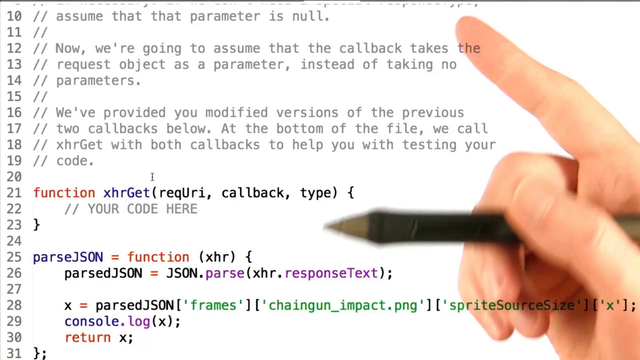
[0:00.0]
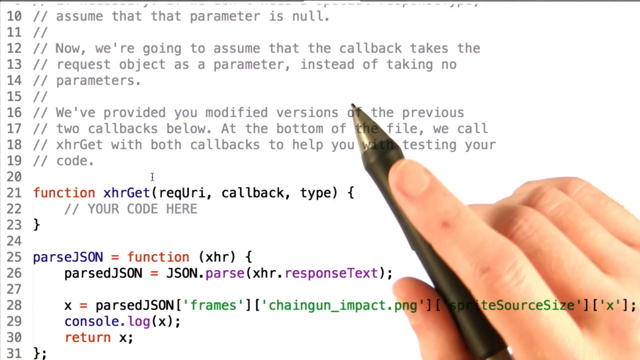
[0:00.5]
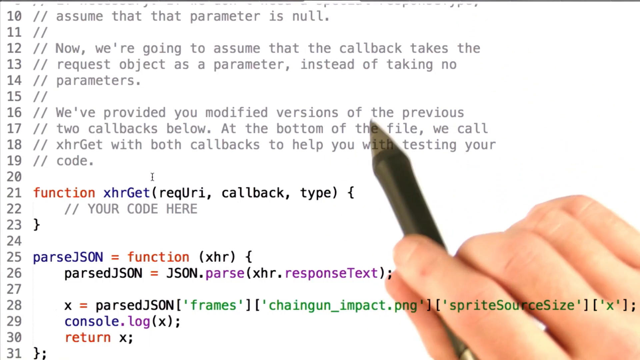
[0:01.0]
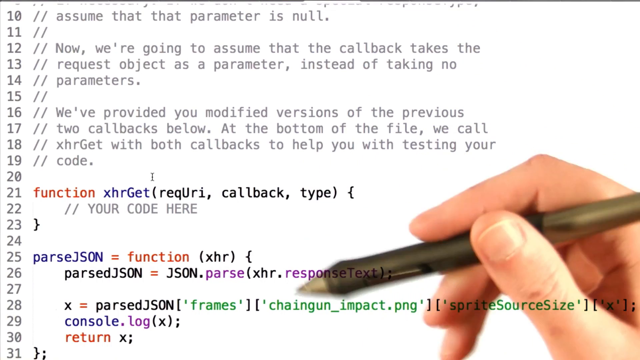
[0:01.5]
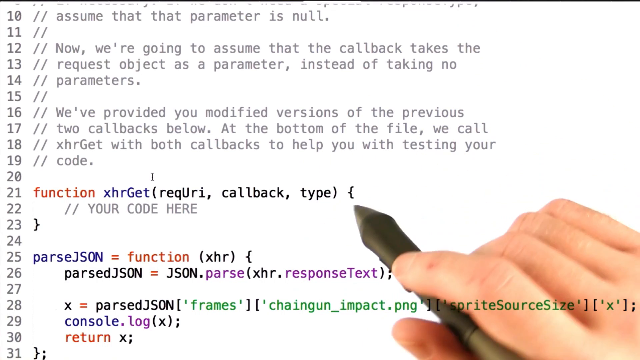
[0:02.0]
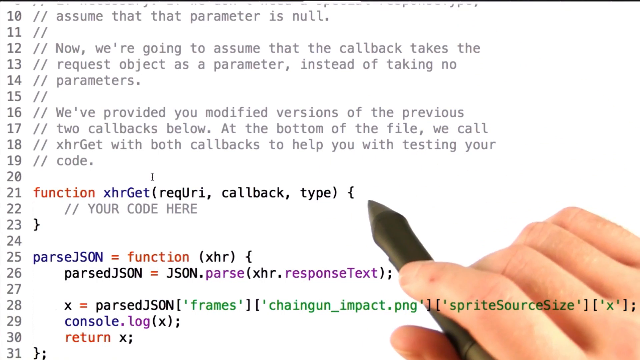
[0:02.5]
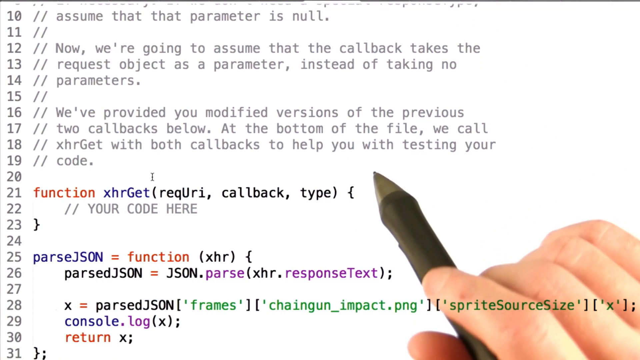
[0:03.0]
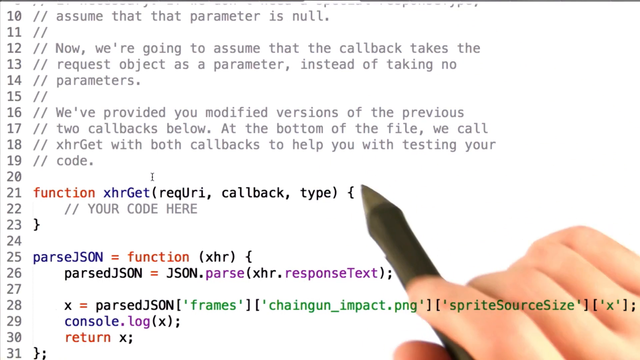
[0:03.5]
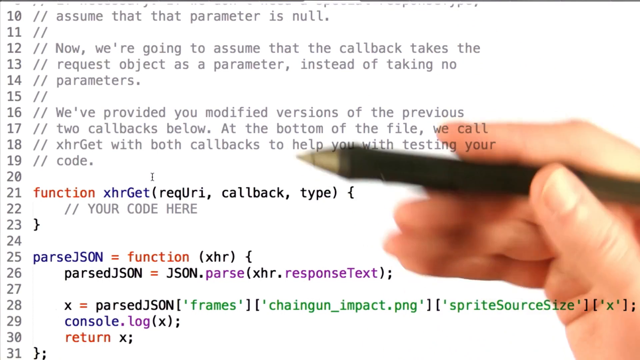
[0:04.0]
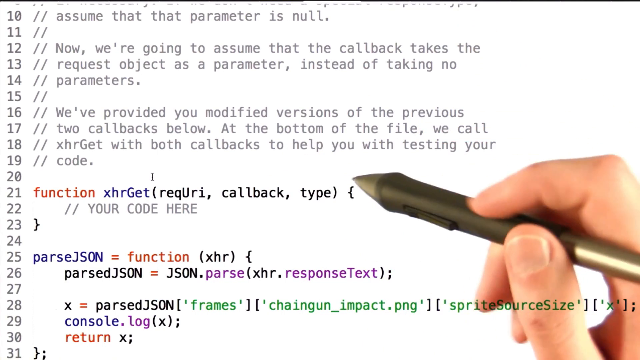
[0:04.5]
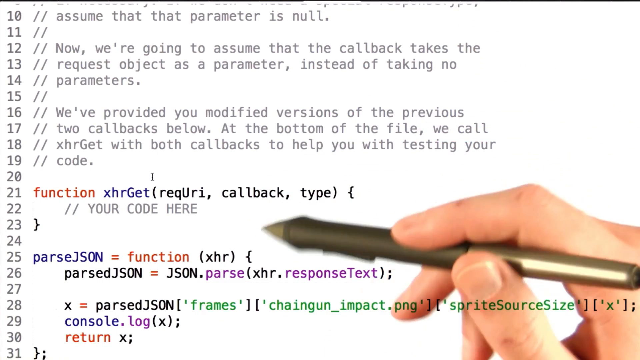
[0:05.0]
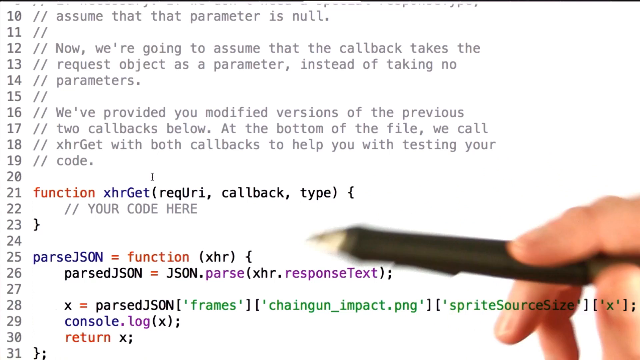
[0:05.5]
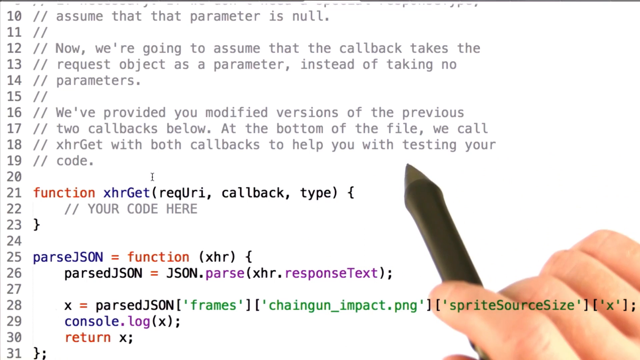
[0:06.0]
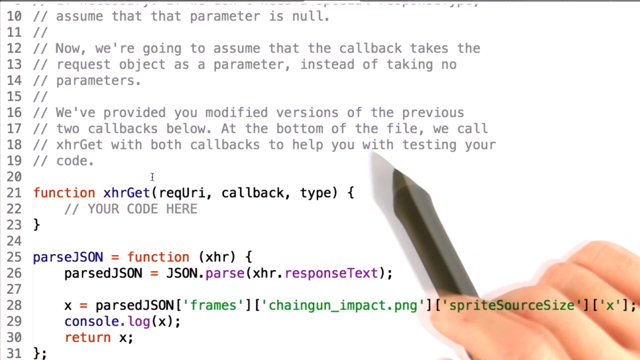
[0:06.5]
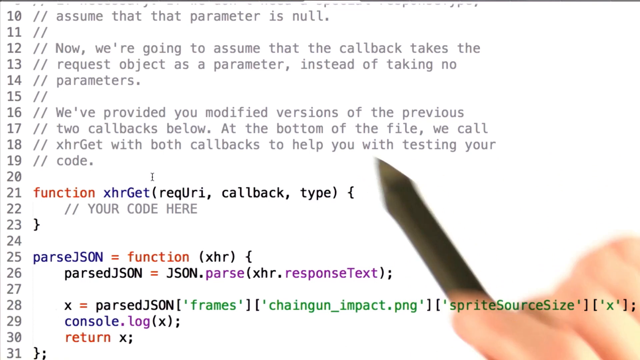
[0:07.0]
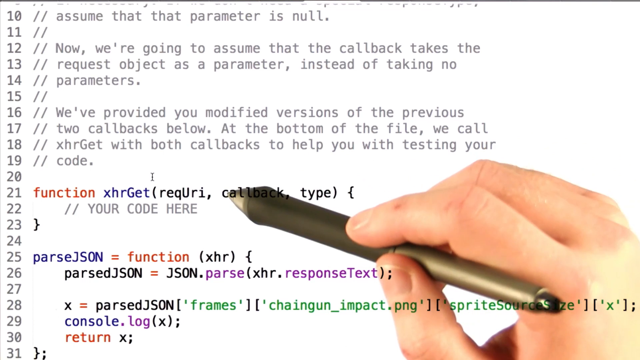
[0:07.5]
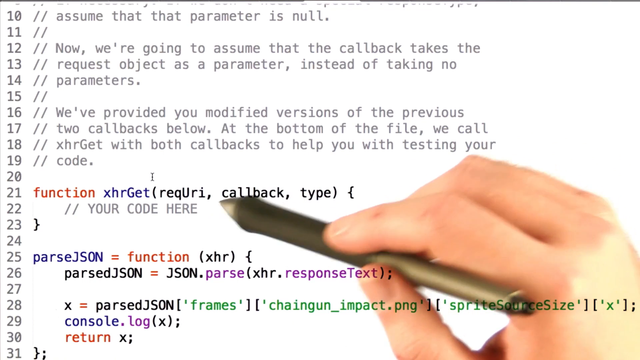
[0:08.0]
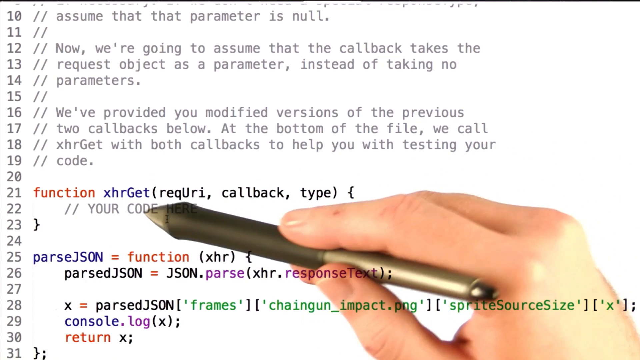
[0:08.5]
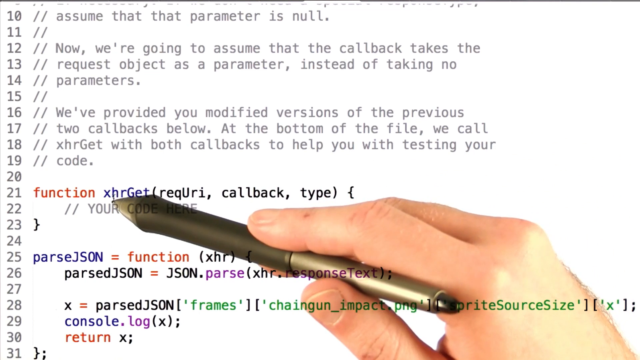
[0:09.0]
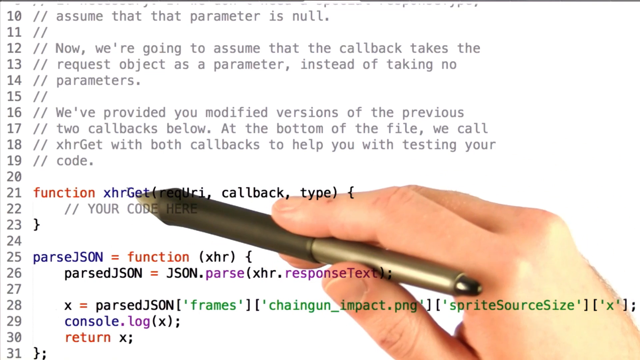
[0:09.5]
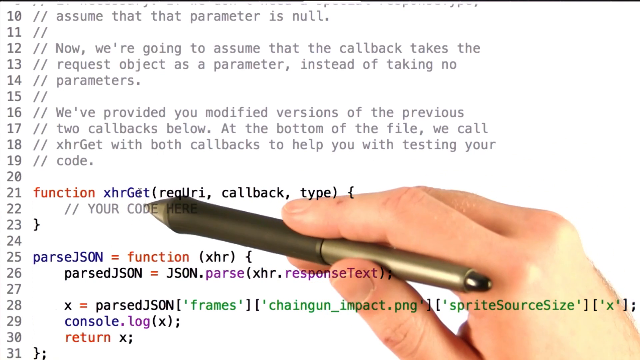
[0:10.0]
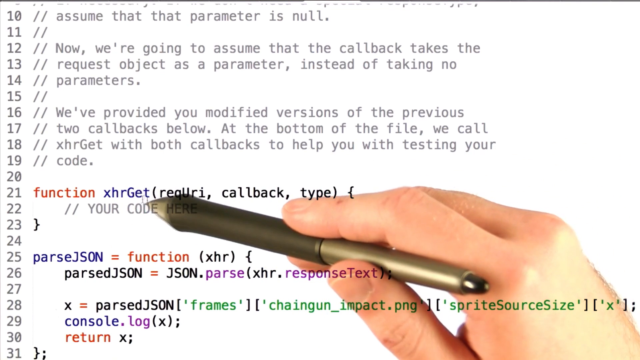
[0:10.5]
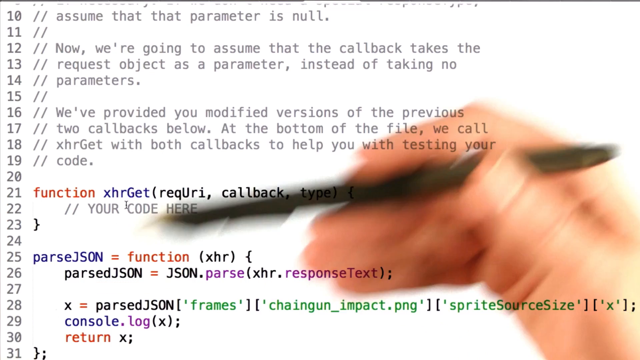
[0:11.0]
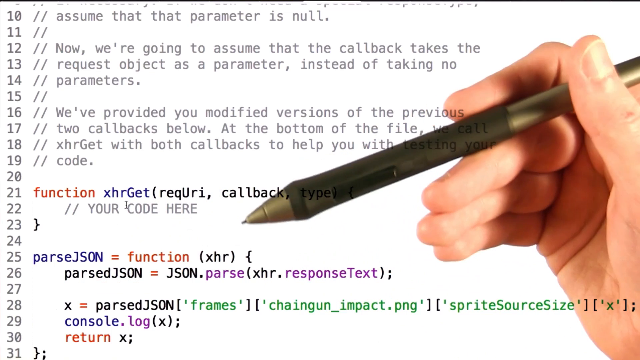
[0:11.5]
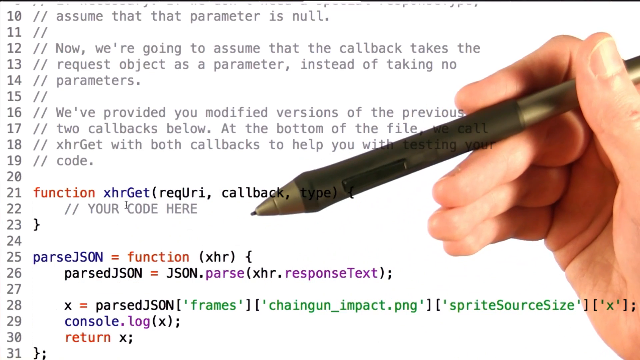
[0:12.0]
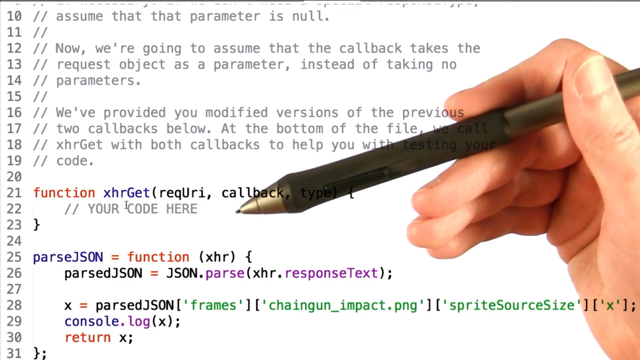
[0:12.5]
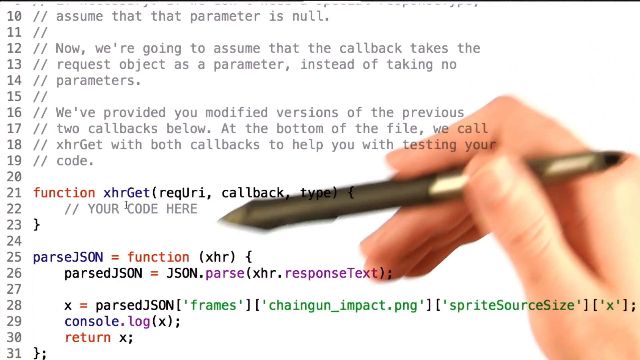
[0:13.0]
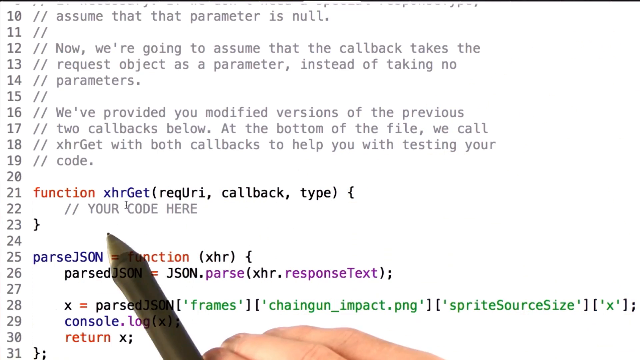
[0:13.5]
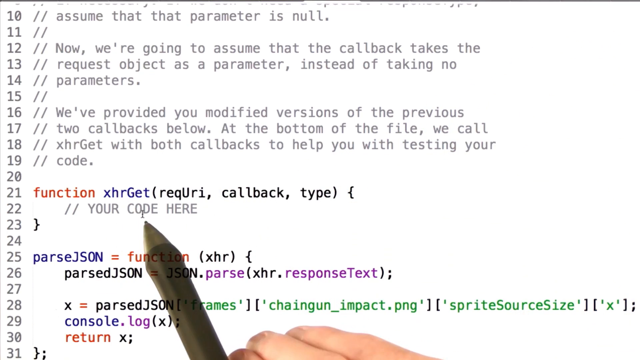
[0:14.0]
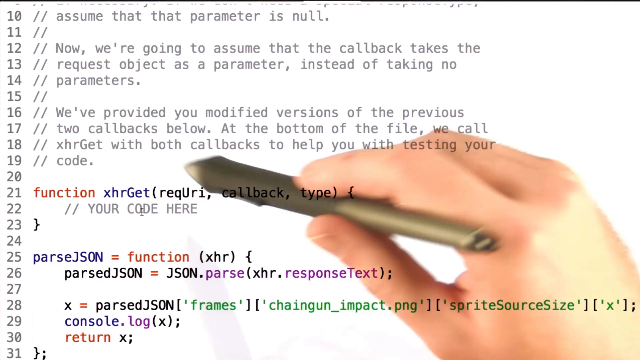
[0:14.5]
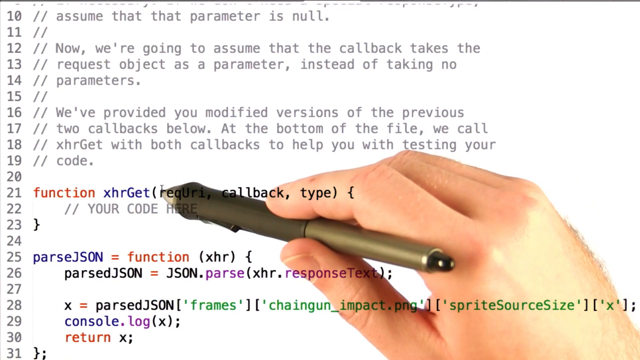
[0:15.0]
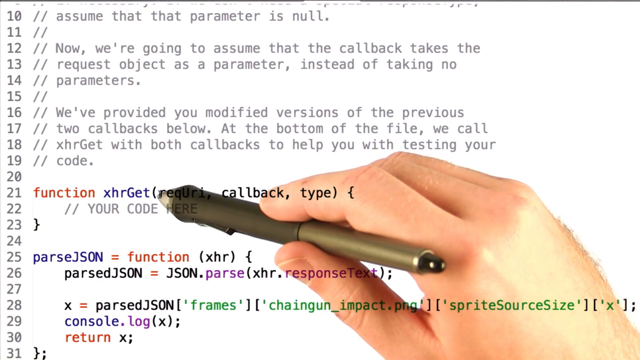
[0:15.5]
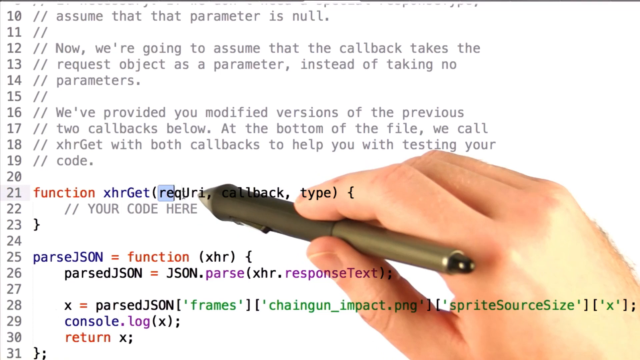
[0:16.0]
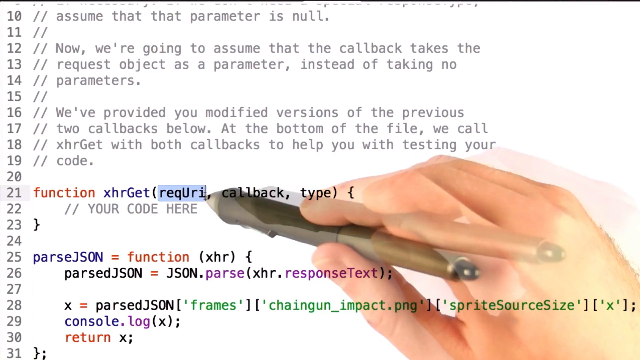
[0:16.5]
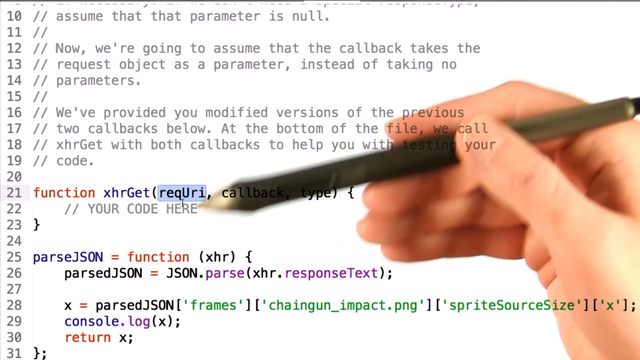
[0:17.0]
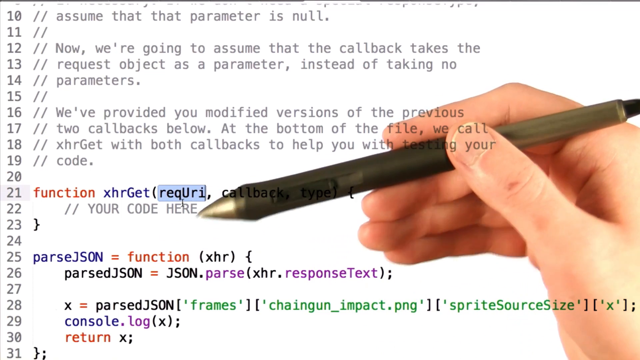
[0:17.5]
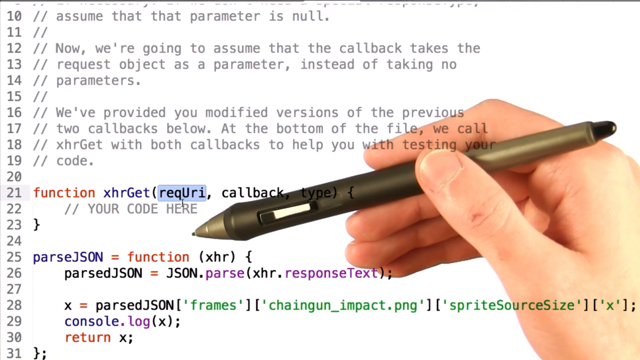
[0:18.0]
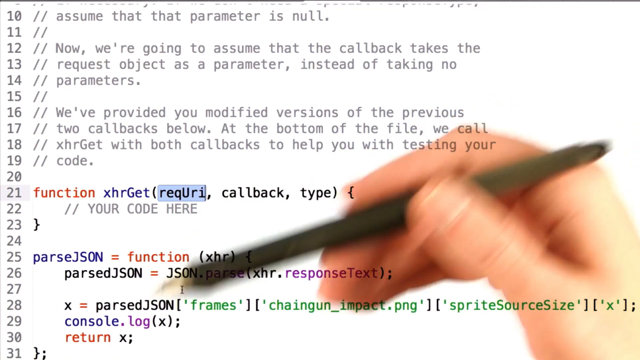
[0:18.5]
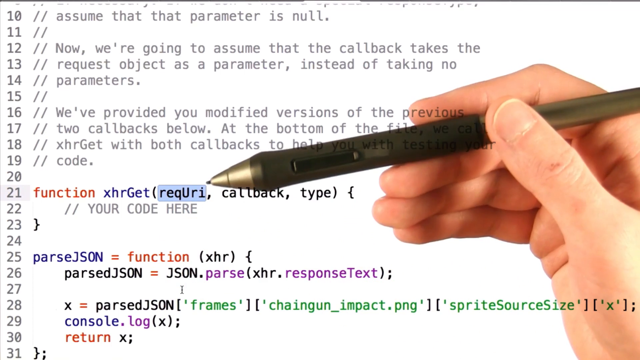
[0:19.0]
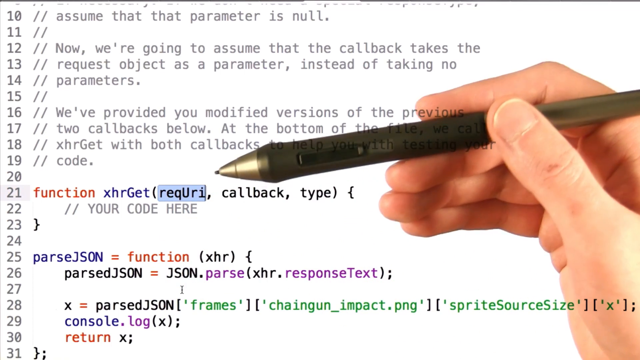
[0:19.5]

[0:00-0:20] Against a blank white background, the numbers 10 to 31 run down the left side. Beside each number is text: some lines start with two slashes followed by gray sentences, others hold code in various colors including black, blue, green, purple, and orange, and some lines are blank with only the line number. A hand holding a pen is in the background; the pen taps and points to various places in the code, circling or tapping on words, and at one point highlights a specific part of the code. The code never moves and stays on lines 10 to 31, while the hand and pen make various gestures pointing to it.